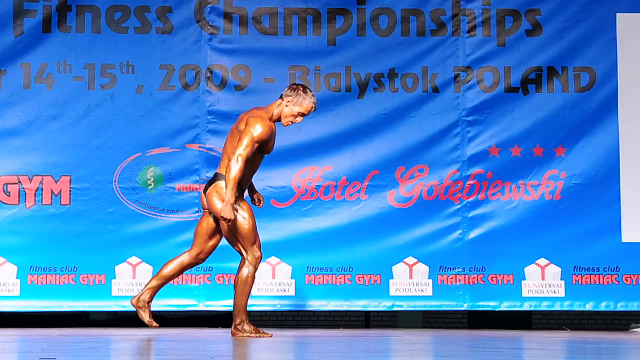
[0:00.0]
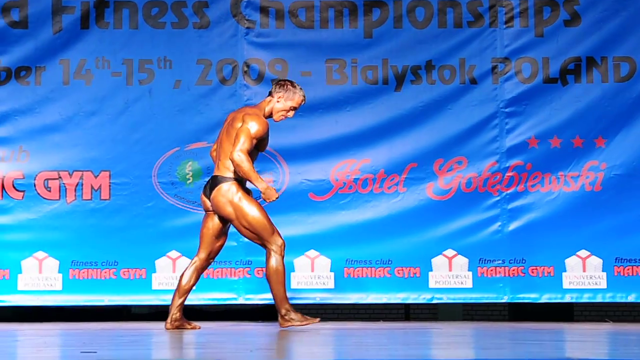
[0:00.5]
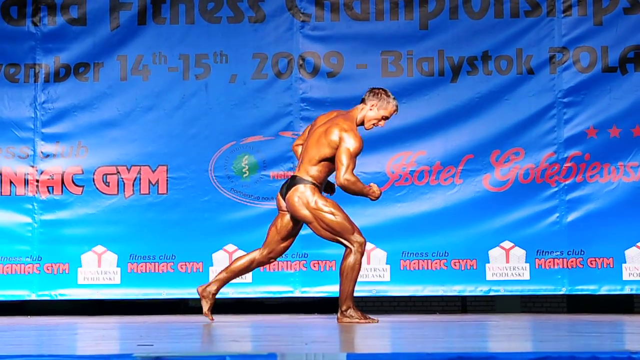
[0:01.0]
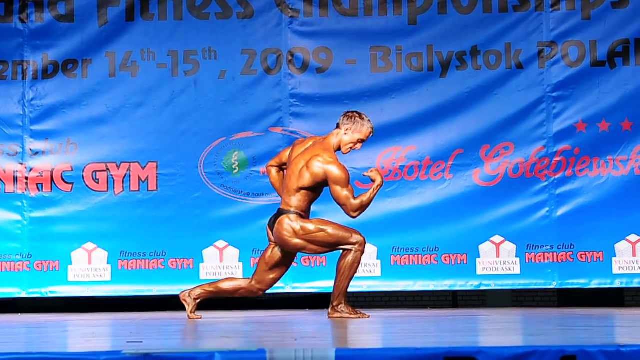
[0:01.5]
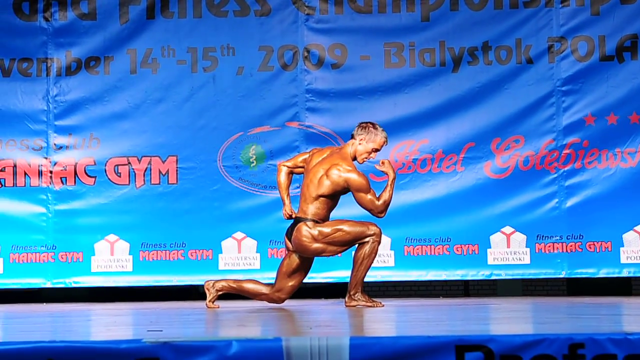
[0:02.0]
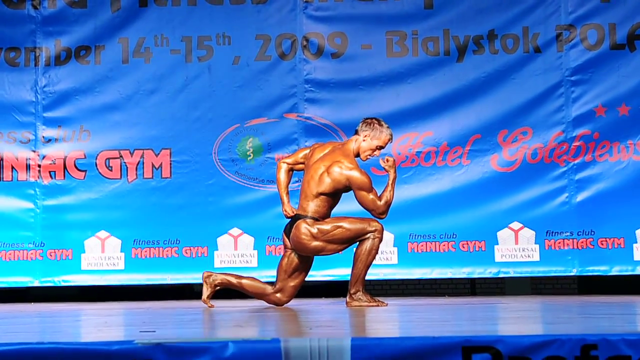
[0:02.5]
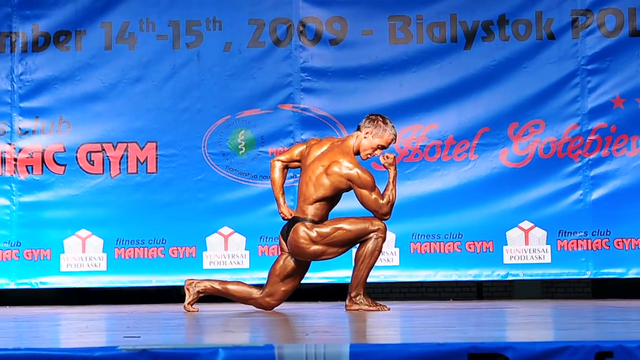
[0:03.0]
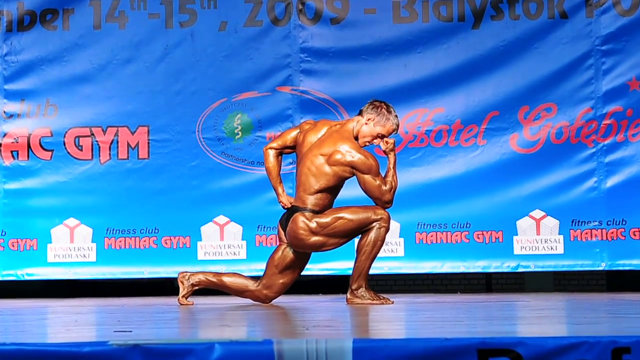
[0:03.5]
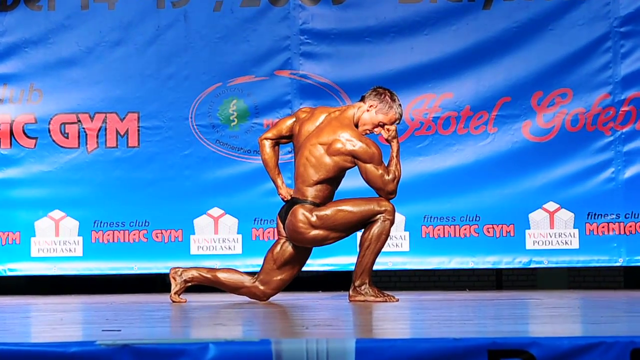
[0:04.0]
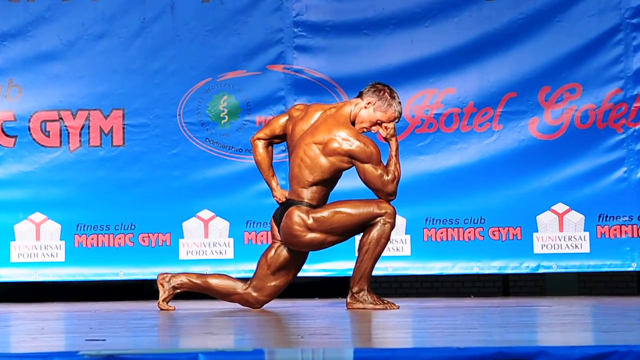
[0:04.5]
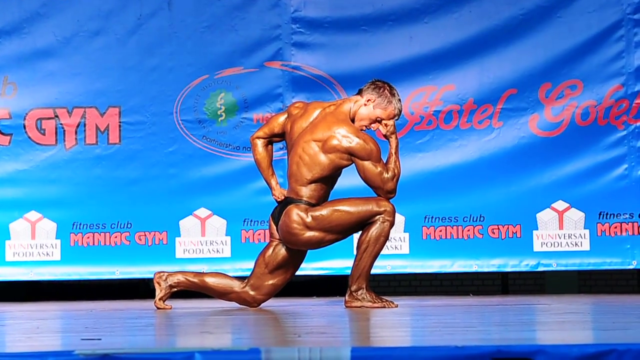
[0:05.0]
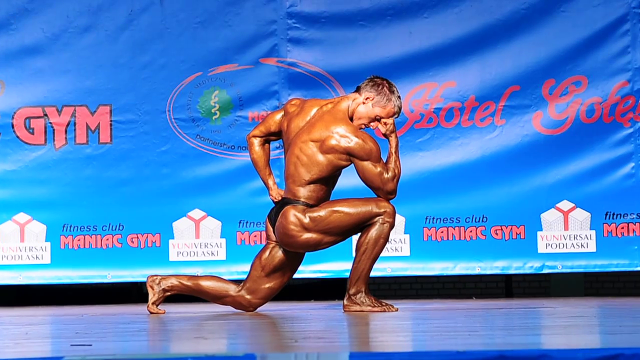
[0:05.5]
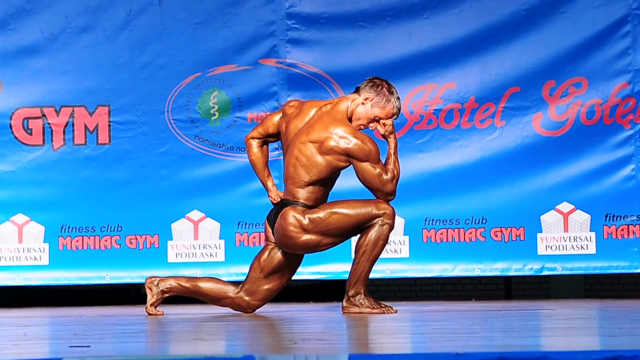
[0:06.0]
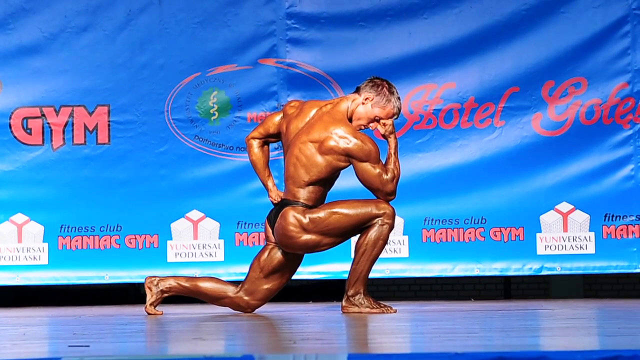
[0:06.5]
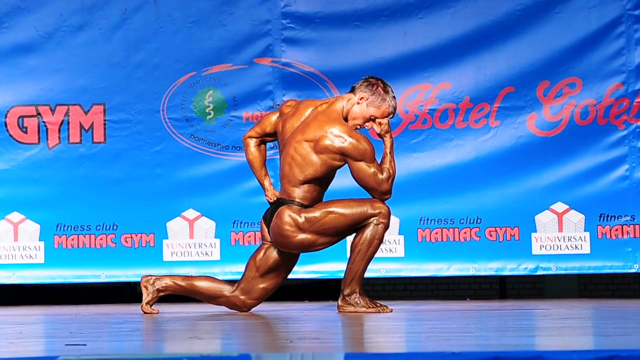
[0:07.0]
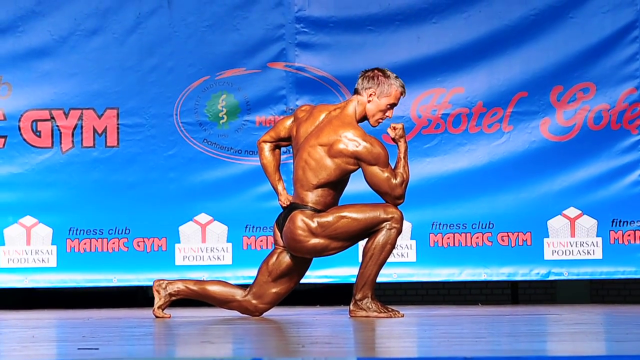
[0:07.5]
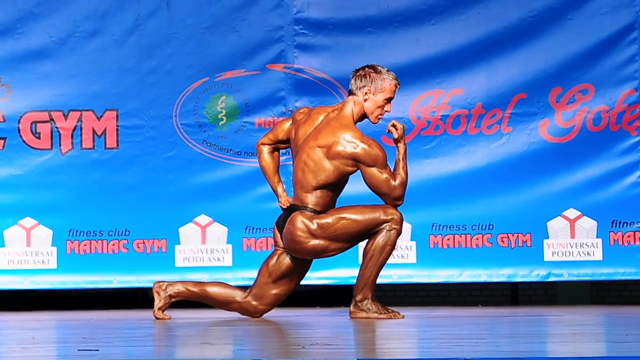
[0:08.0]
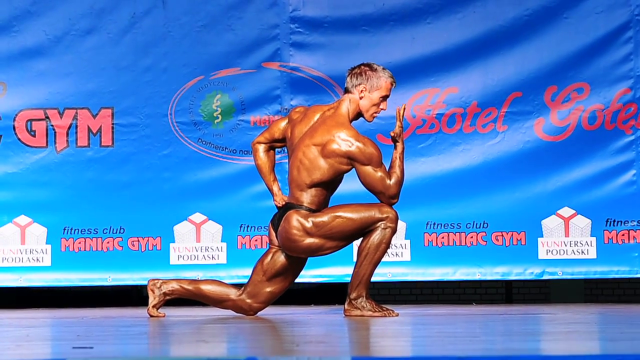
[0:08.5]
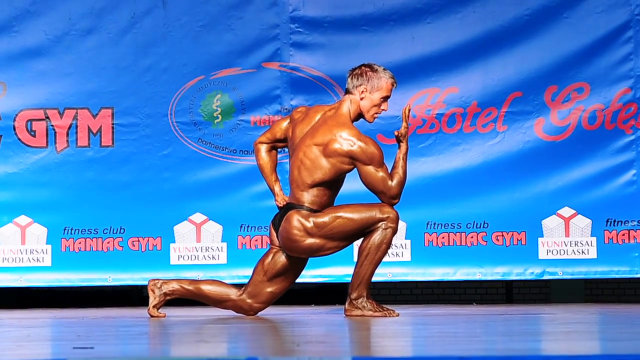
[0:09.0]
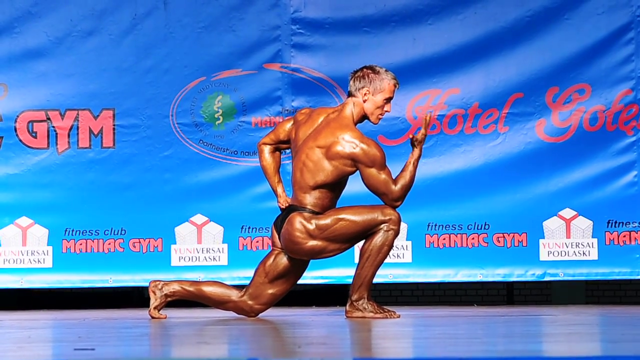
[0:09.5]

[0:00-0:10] A man poses at what appears to be some sort of bodybuilding competition; it looks like he is on the stage of a body fitness championship. He is Caucasian, tanned and oiled. A banner display in the background reads "Fitness championships" and shows the date as the 14th and 15th of 2009, without a month. It also shows the location as Bialystok, Poland. At the bottom is the logo for Maniac Gym Fitness Club, along with other logos for Hotel Gotebiewski.